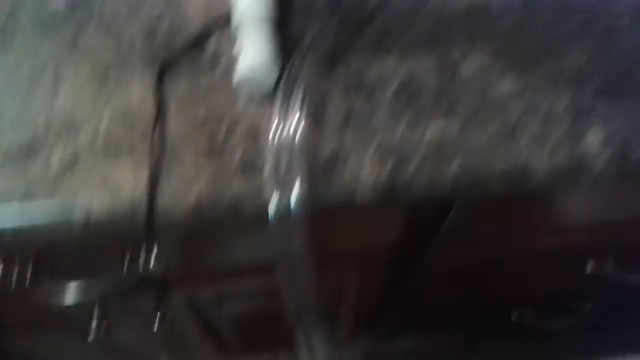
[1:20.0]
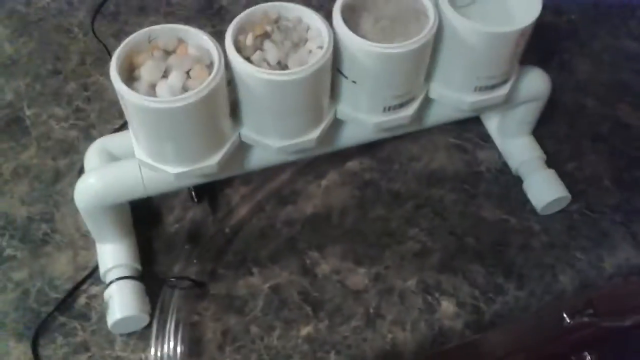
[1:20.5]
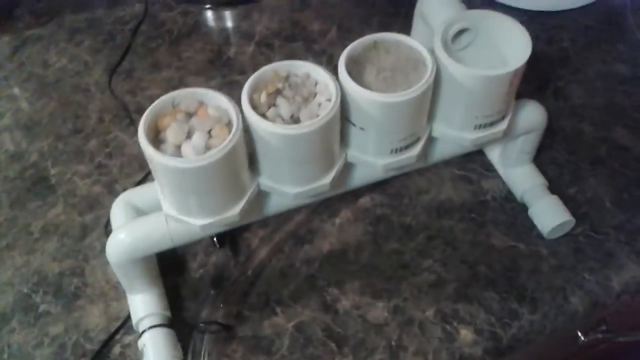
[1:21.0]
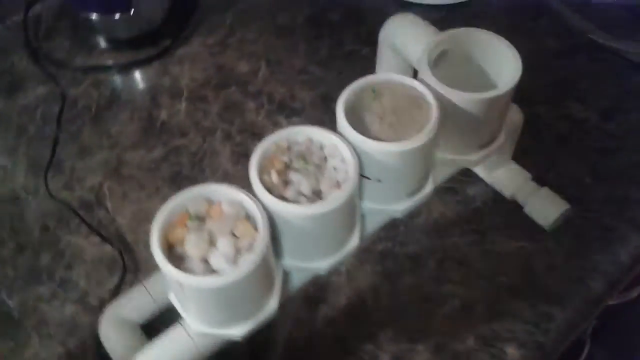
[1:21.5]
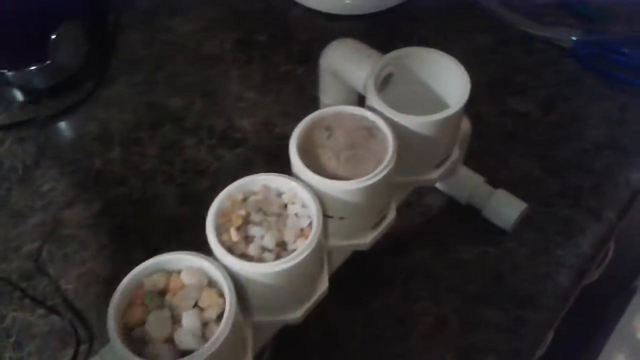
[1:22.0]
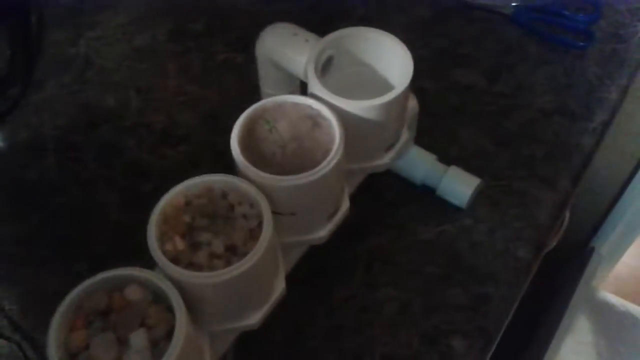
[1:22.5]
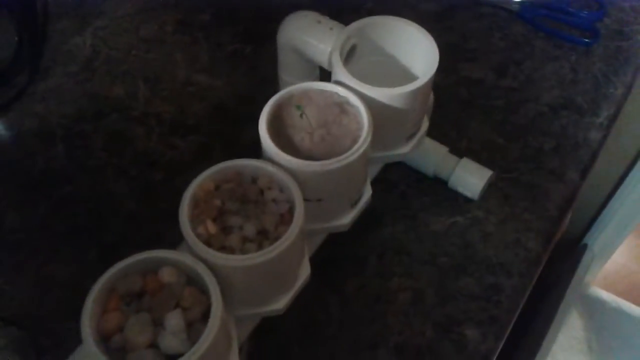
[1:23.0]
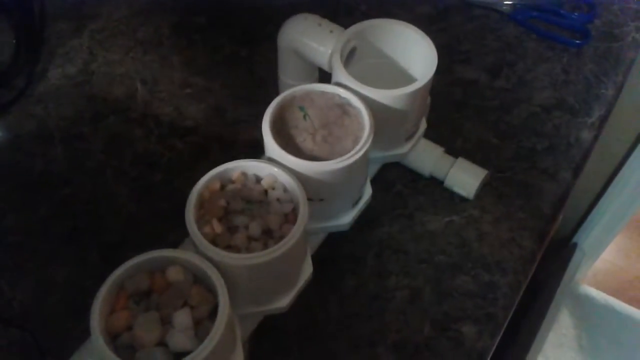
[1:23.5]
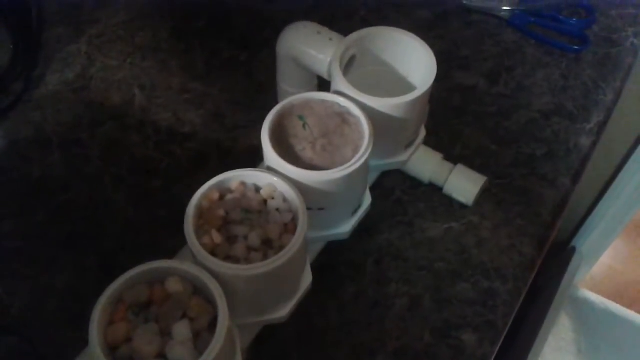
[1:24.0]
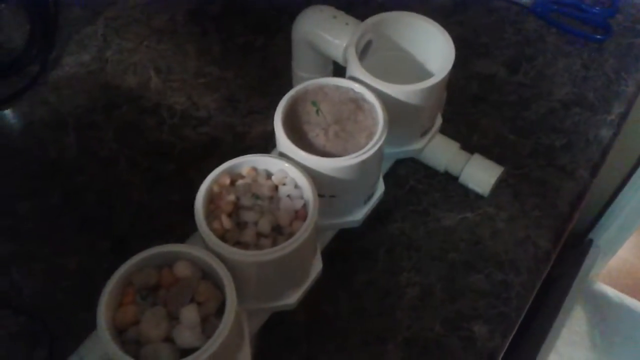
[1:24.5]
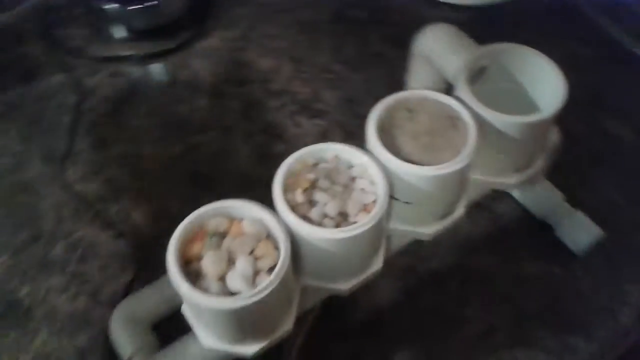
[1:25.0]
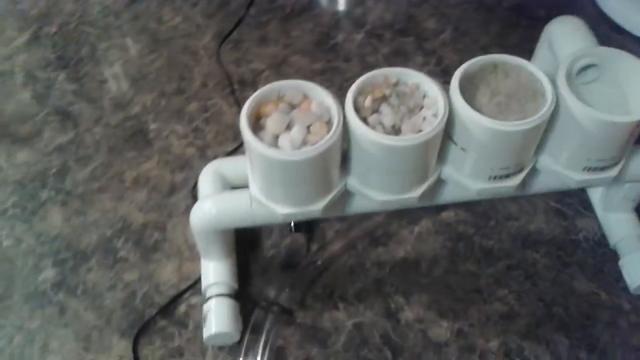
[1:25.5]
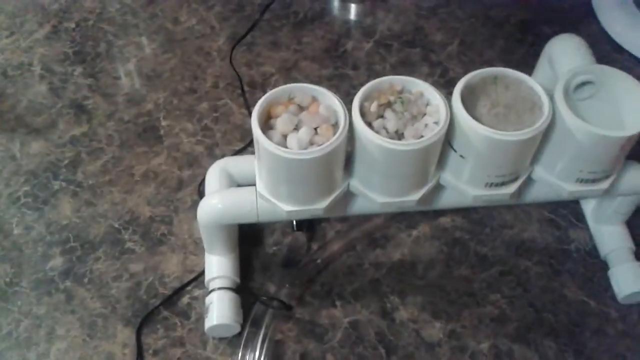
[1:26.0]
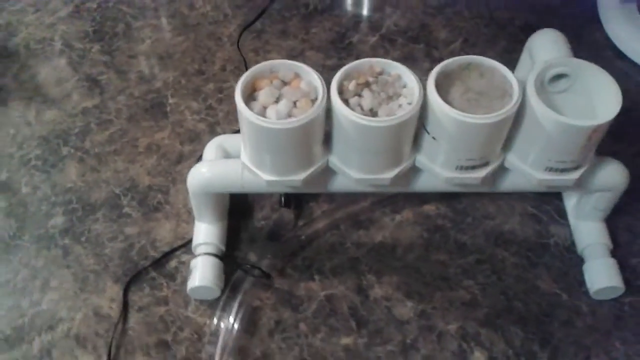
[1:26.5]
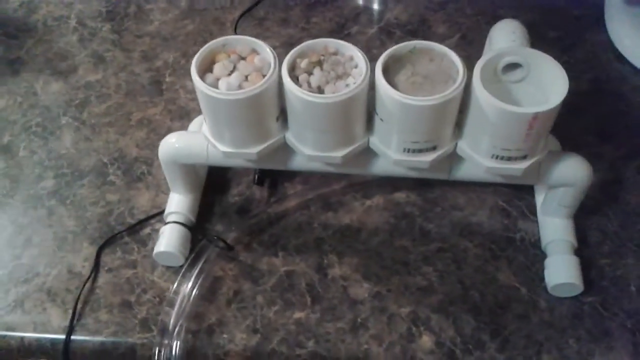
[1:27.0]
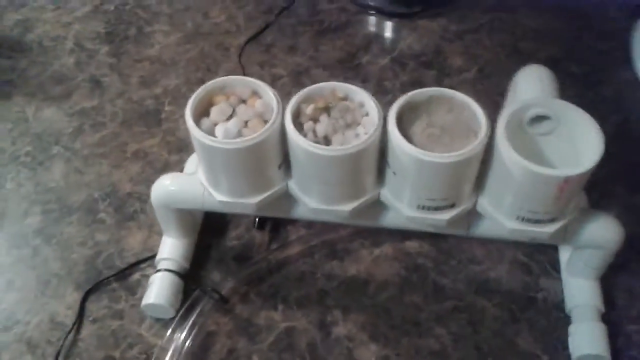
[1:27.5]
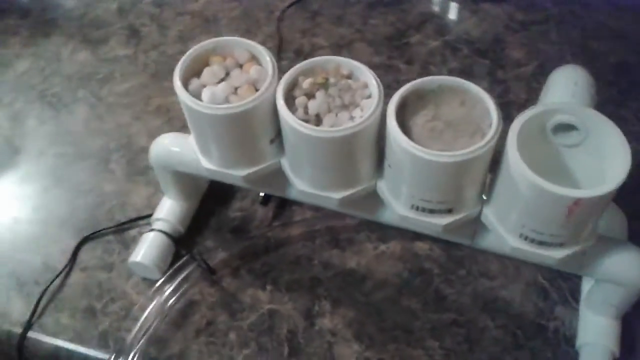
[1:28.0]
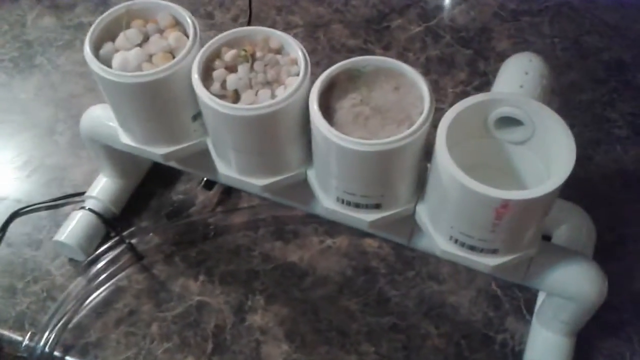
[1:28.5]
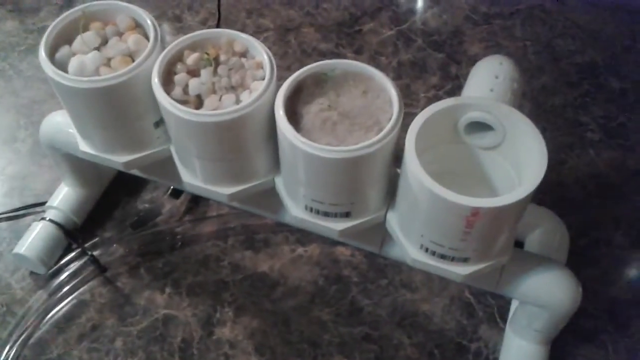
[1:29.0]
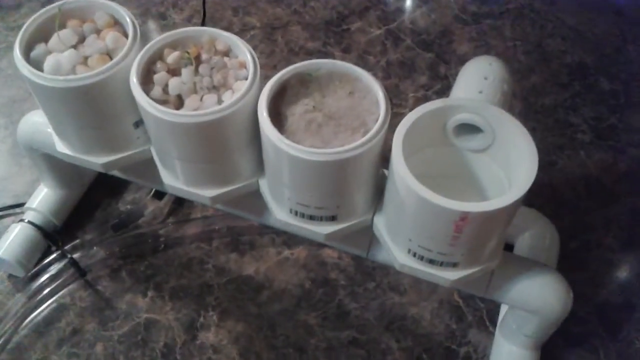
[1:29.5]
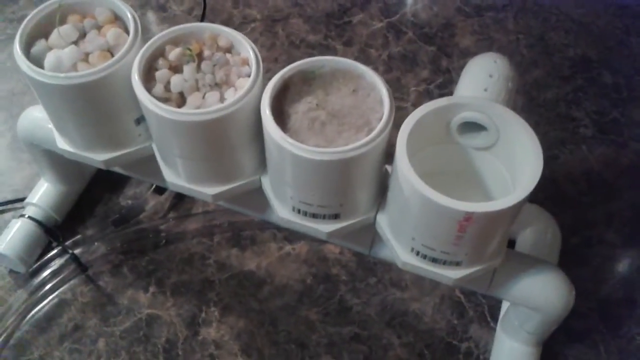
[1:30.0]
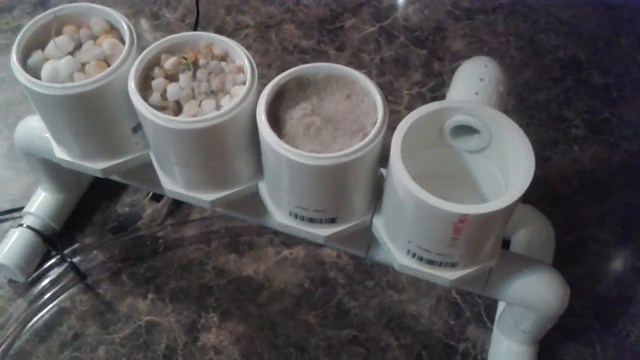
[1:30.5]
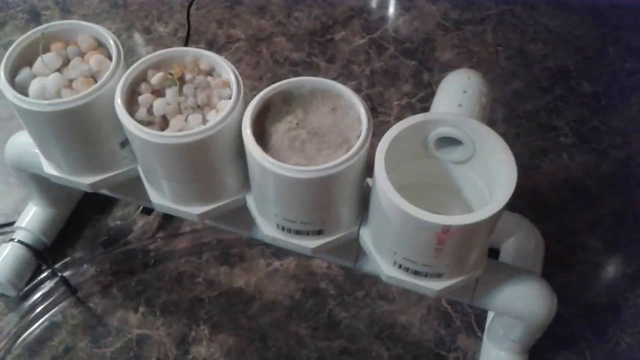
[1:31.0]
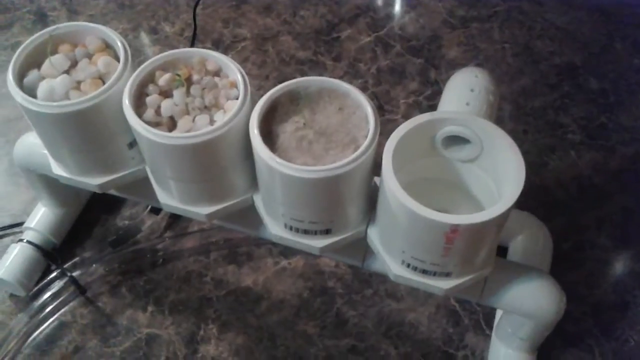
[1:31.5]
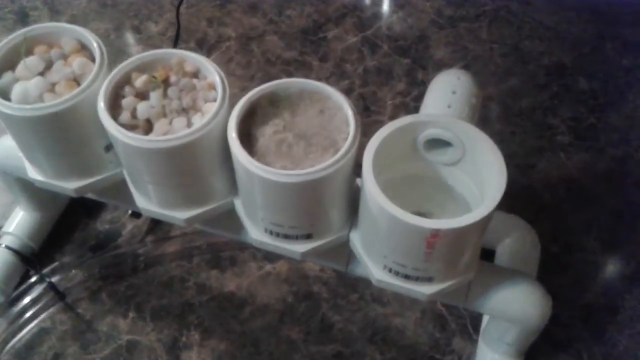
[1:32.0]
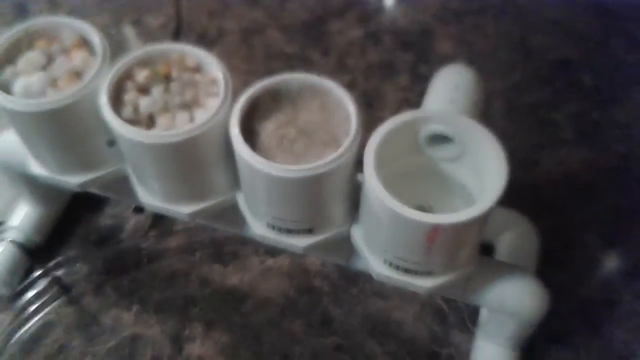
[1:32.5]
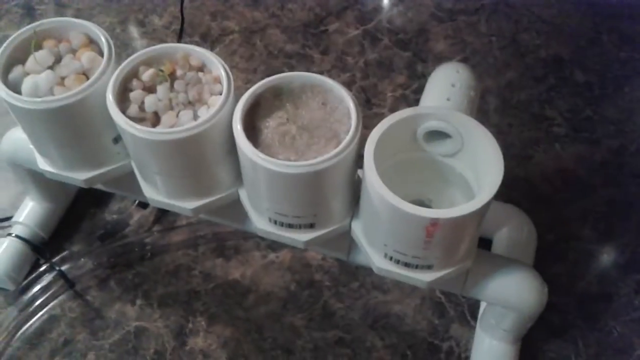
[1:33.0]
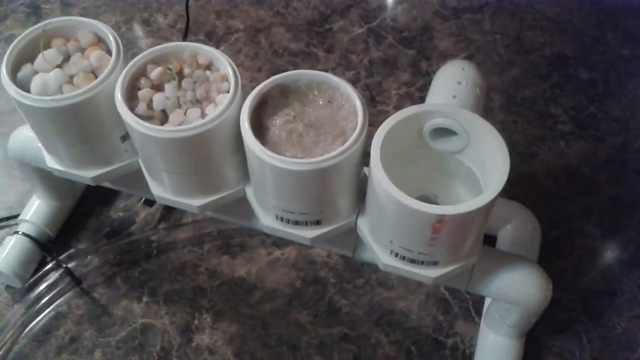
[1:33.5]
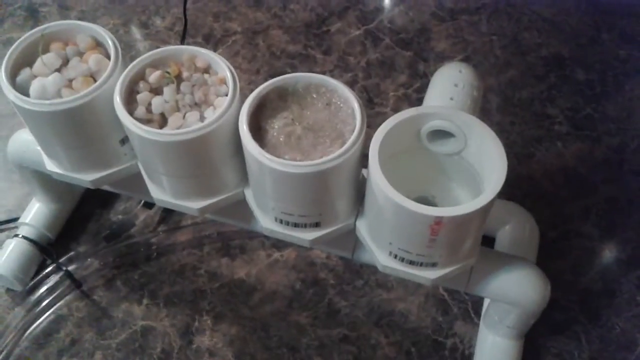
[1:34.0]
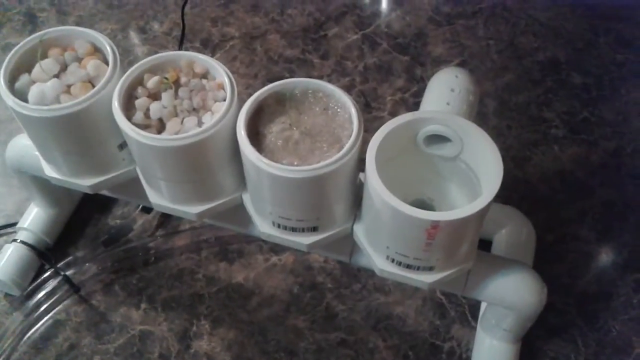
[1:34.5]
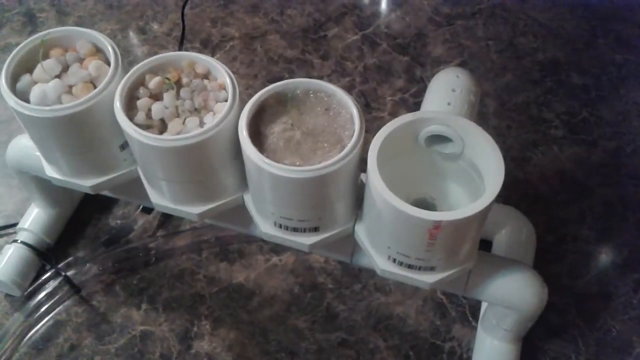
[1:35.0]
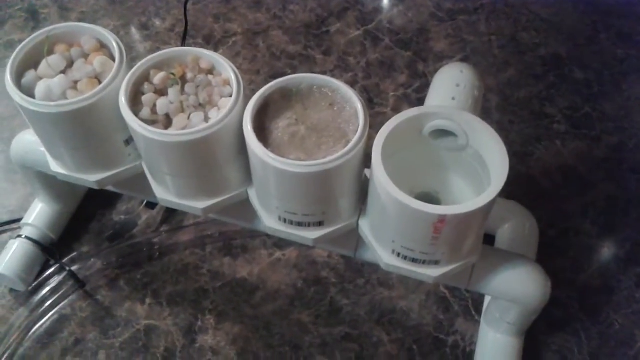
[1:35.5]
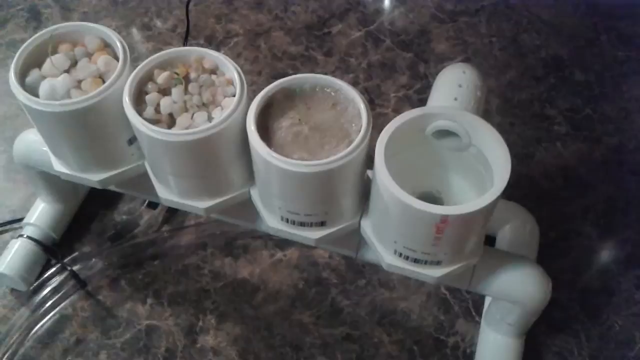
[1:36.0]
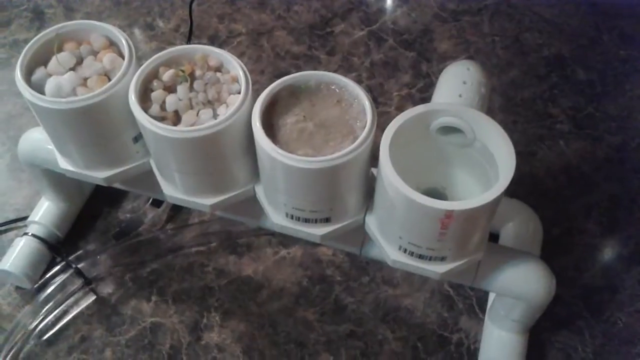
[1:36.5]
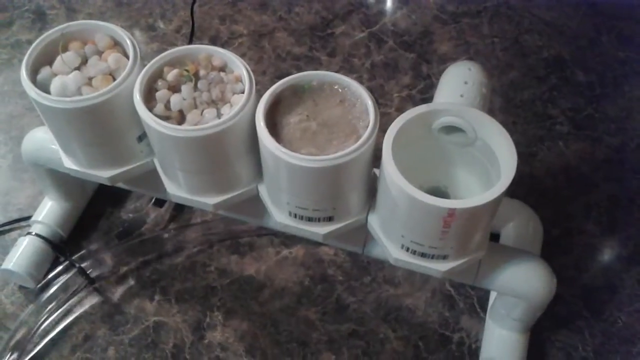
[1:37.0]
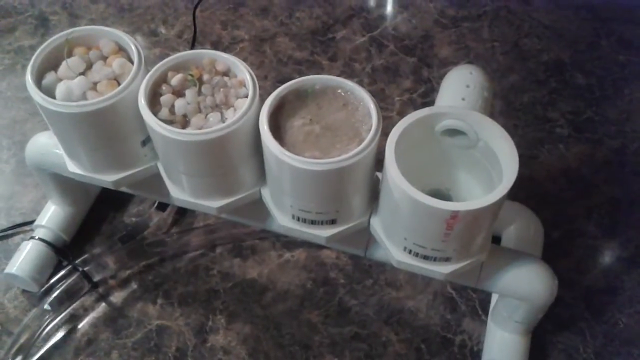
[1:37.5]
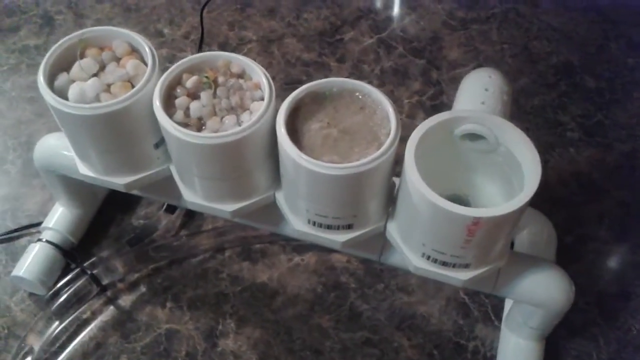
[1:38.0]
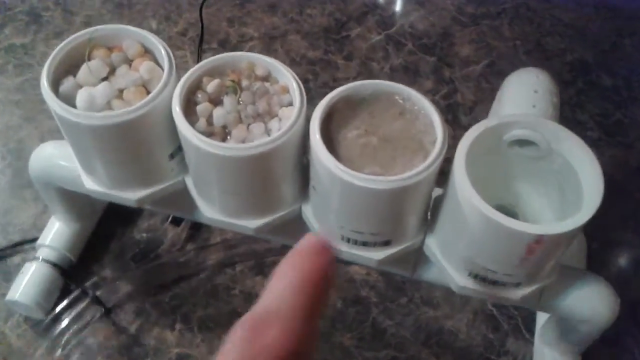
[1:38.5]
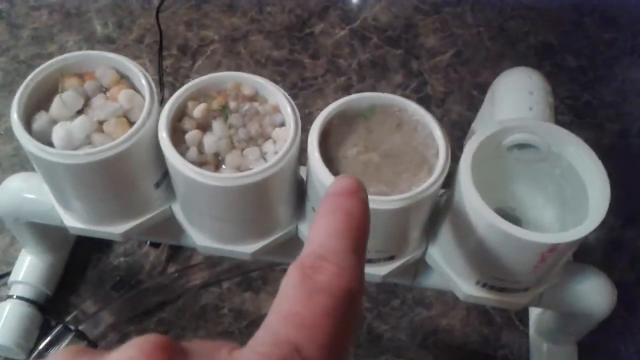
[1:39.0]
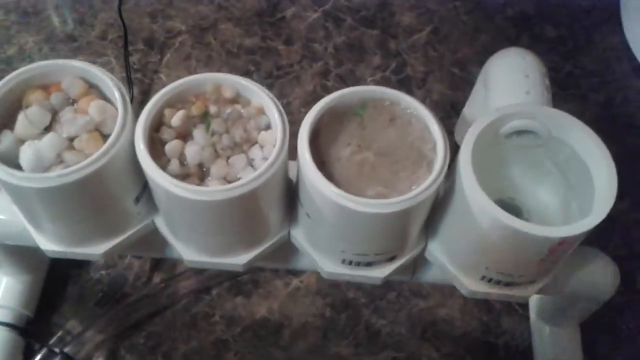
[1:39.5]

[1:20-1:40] In the DIY video, apparently about something like hydroponic gardening, a guy points to three cylinder-type containers on his kitchen counter. Each has a very thin, tiny stem growing out of it, and they hold different types of rocks. Plastic tubing comes out into a bucket on the floor, and there seems to be a small pump. The man looks like he may have just turned something on, and water comes out. The hole turns out to be an overflow, and the water apparently comes out of the cylinders and down into the bucket by gravity. There looked to be a pump in the bucket that was not attached to anything, resembling a tank pump. The setup looks slightly homemade.